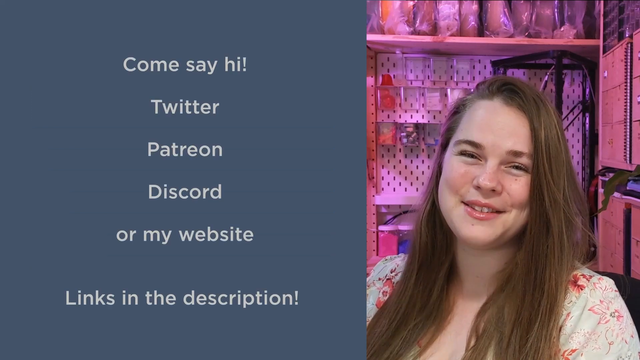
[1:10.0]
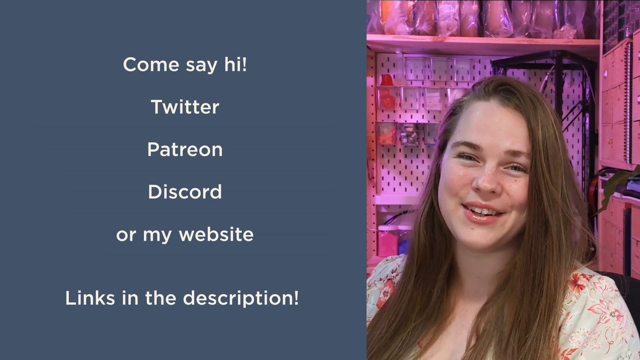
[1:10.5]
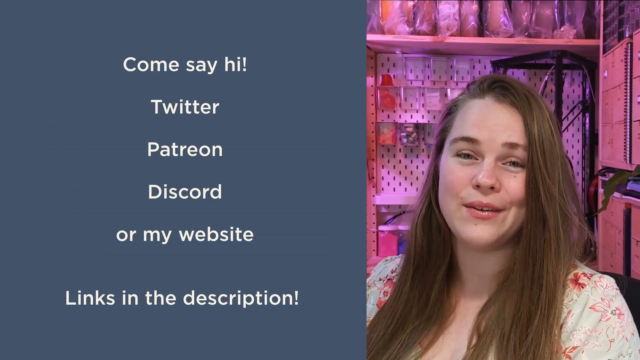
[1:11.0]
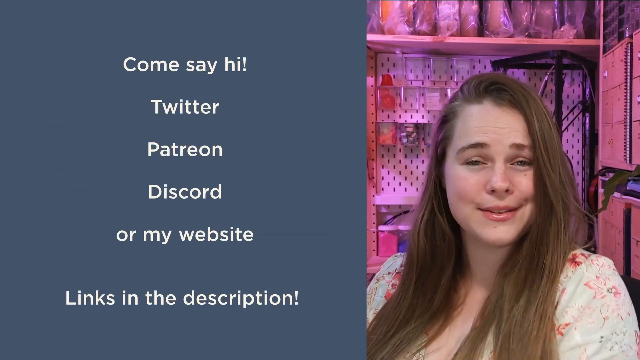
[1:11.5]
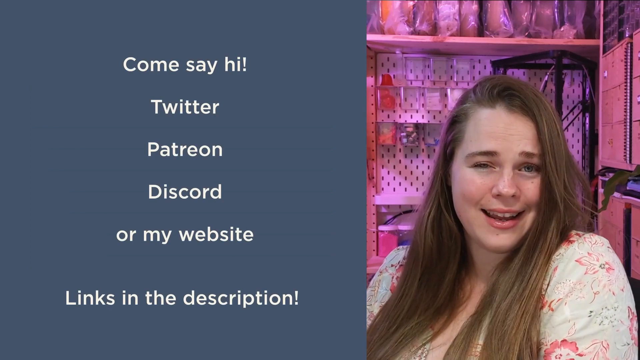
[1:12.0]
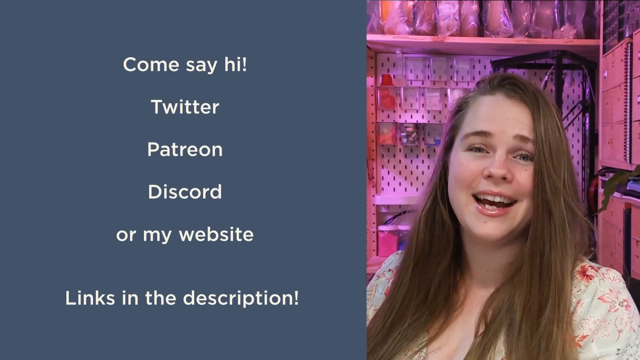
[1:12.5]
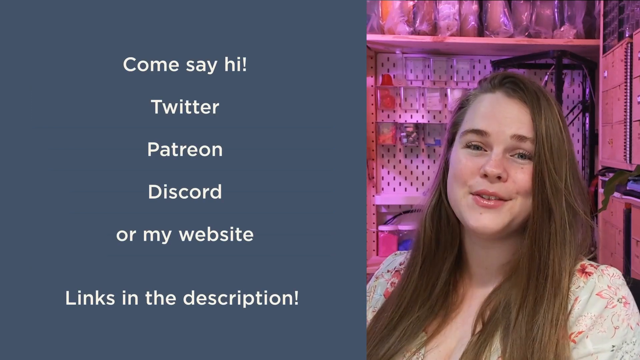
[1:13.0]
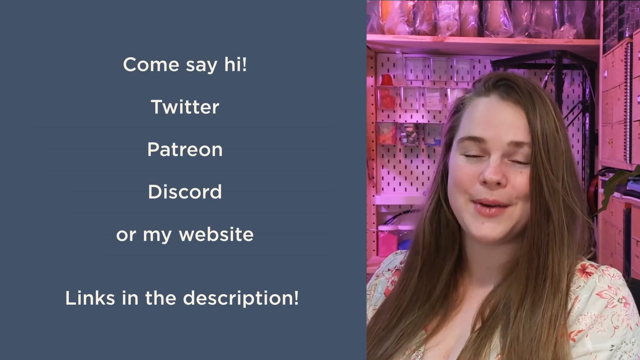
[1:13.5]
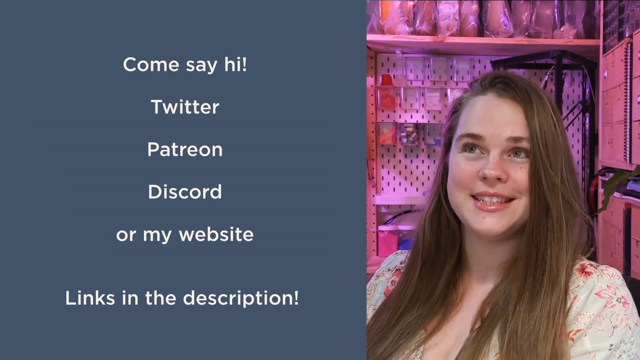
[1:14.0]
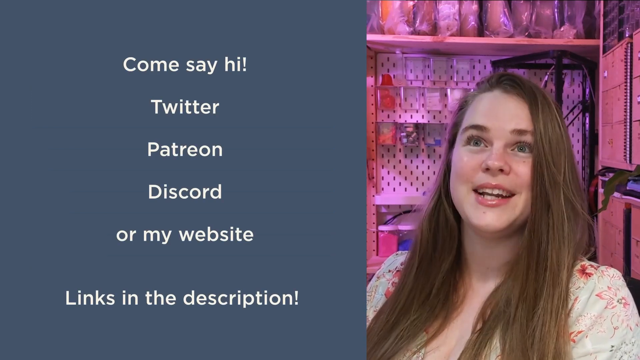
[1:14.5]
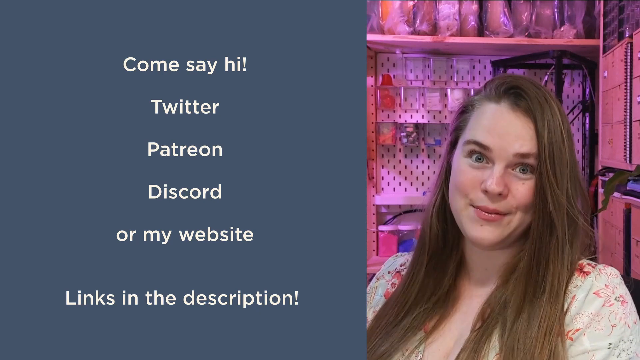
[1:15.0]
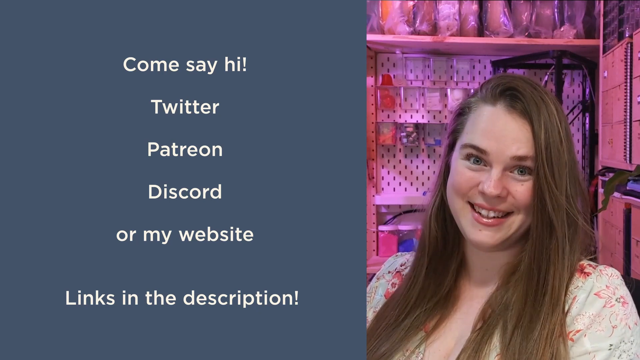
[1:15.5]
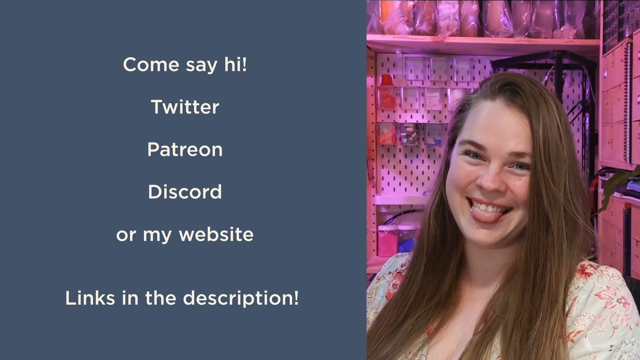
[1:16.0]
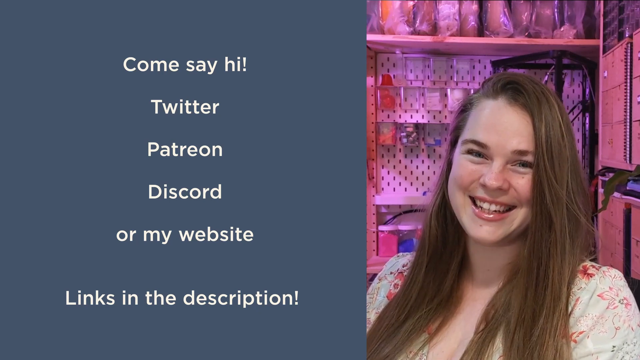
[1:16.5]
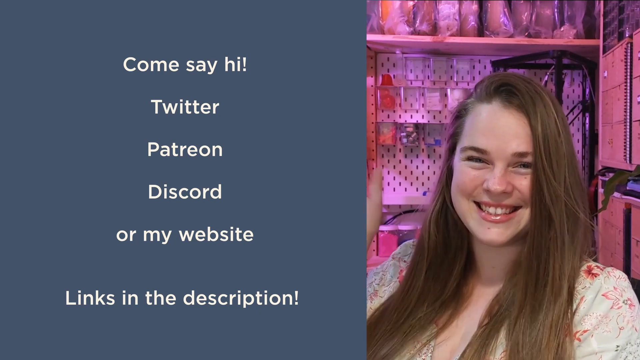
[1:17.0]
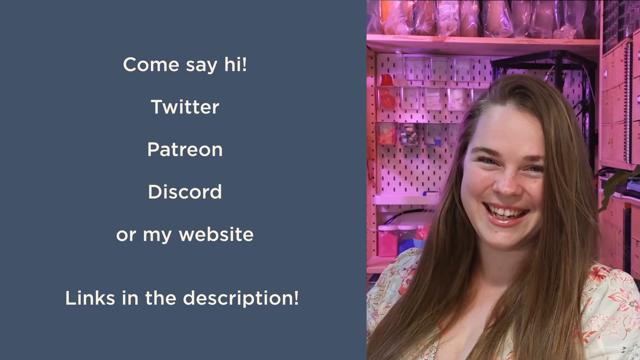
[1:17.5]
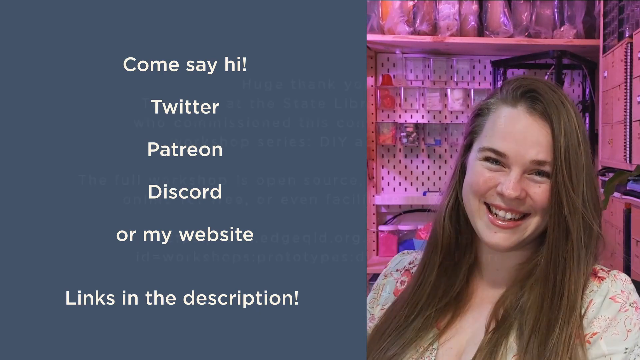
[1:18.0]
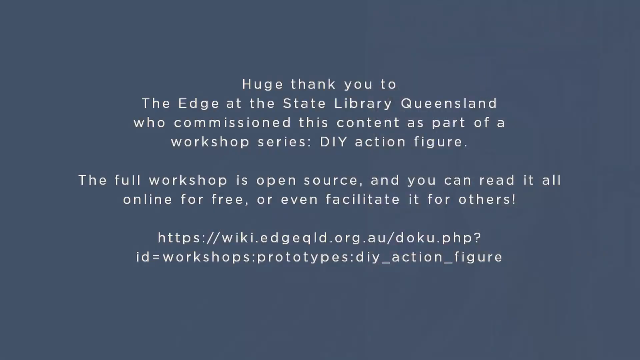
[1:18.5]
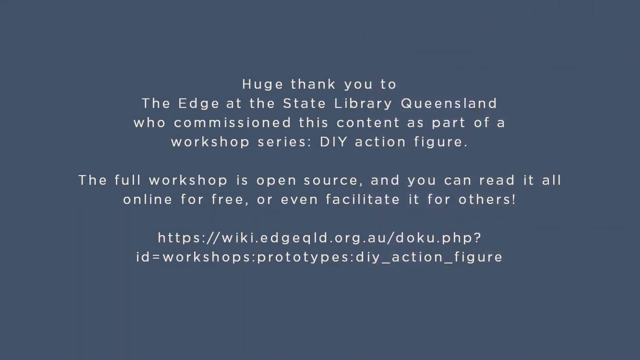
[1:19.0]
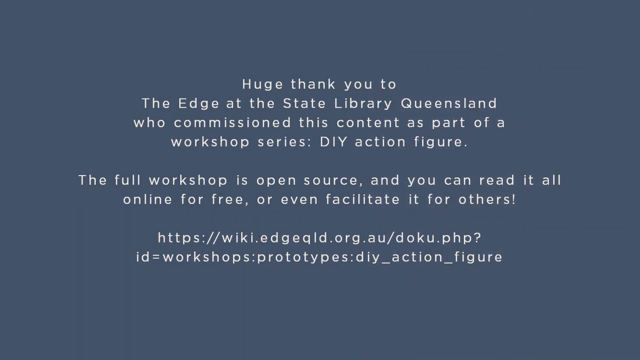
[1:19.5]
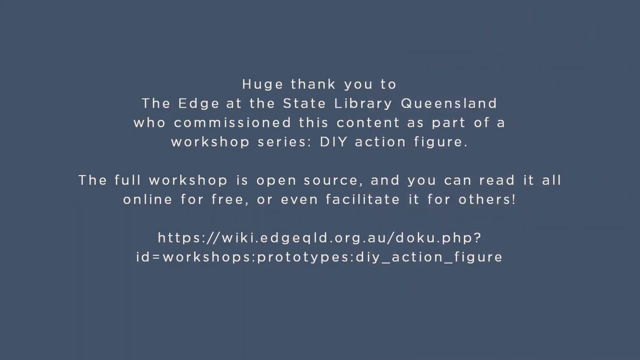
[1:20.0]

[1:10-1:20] The screen is split. On the right, a young woman with long light brown hair talks directly to the camera, very animated as she speaks. She smiles, nods, and lifts her shoulders at the end, then sticks her tongue out slightly between her teeth and waves goodbye while smiling broadly. On the left is a gray background with text reading "Come say hi!! Twitter, Patreon, Discord, or my website. Links in the description." This fades to a completely gray screen with text reading "Huge thank you to the Edge of the State Library, Queensland, who commissioned this content as part of a workshop series: DIY action figure. The full workshop is open source, and you can read it all online for free, or even facilitated for others!" Below this is a web address.